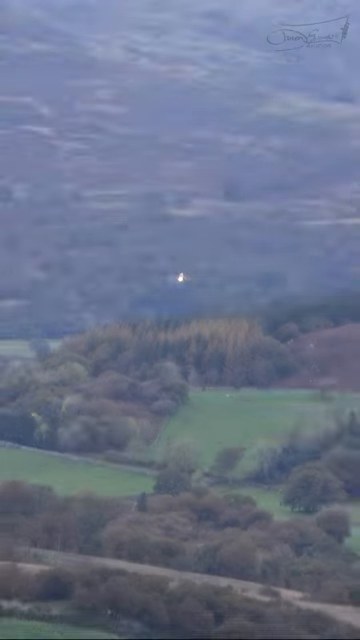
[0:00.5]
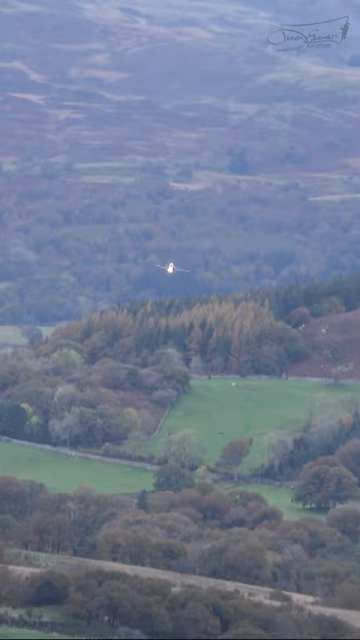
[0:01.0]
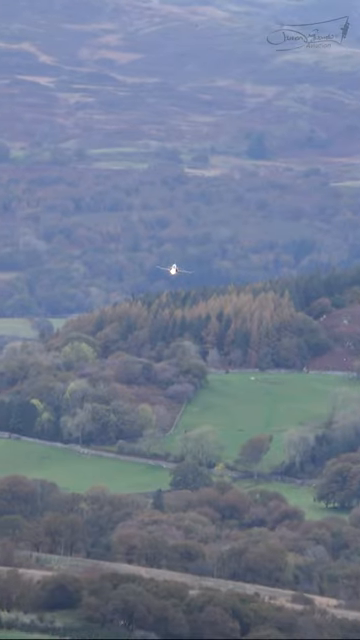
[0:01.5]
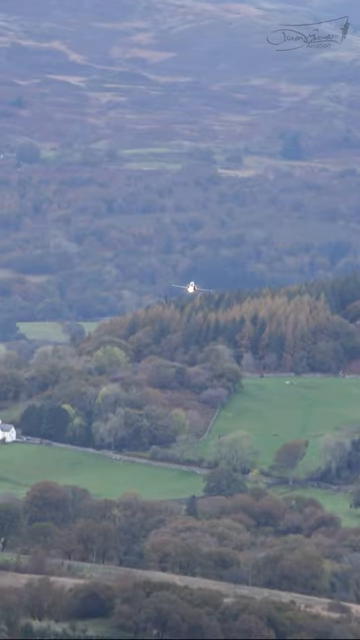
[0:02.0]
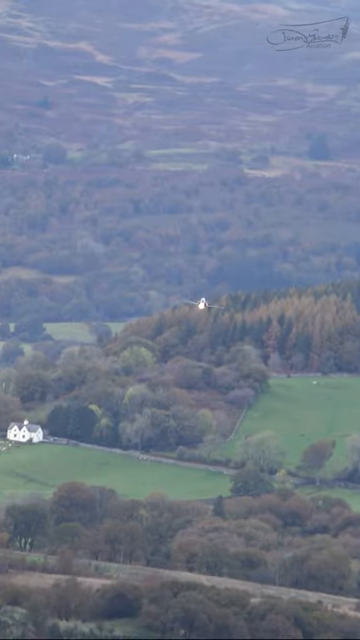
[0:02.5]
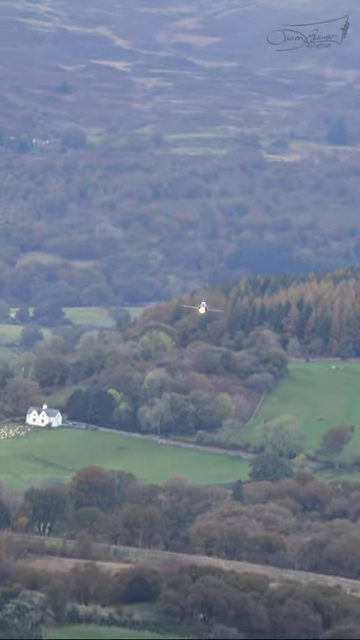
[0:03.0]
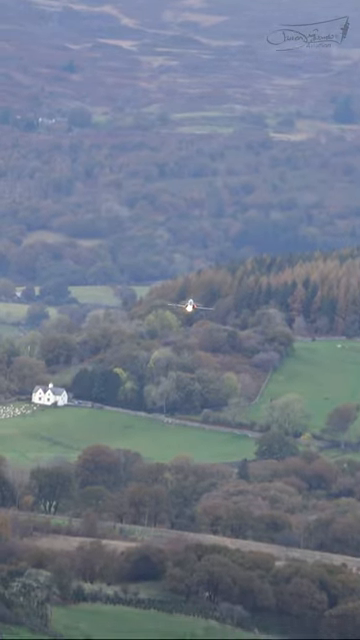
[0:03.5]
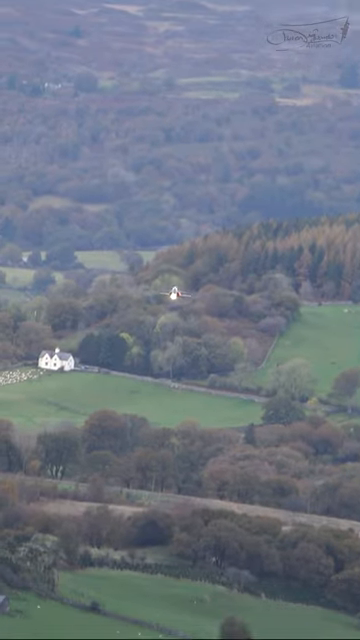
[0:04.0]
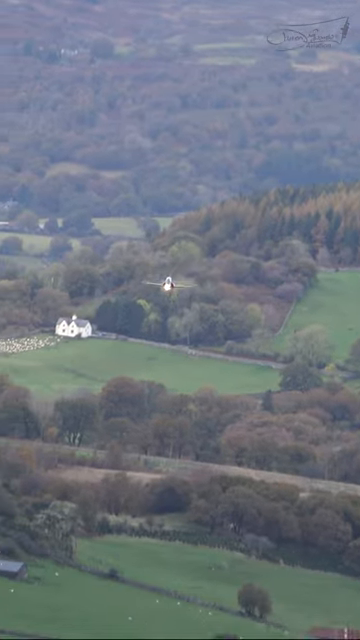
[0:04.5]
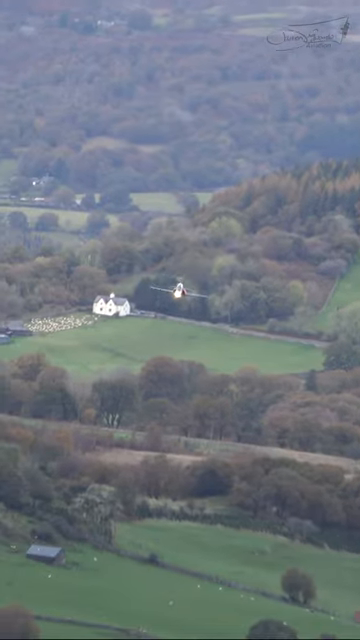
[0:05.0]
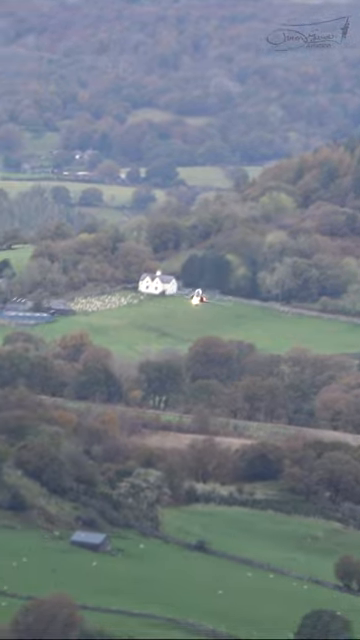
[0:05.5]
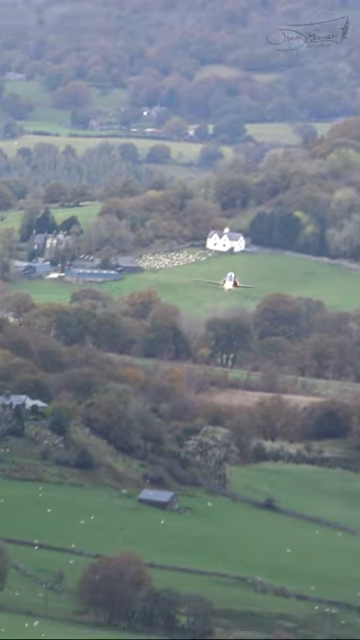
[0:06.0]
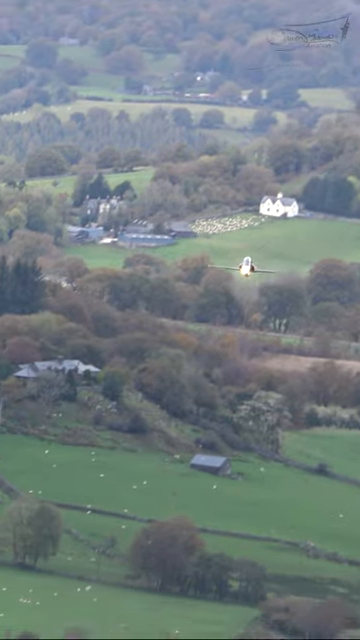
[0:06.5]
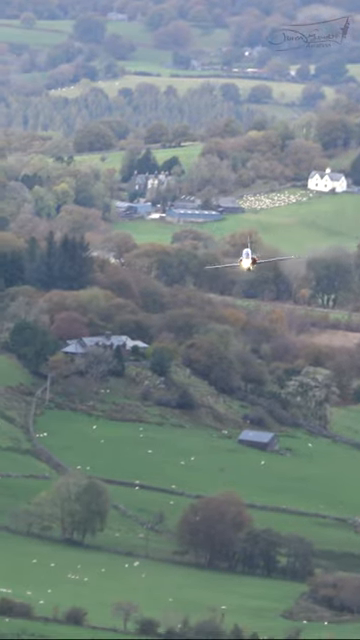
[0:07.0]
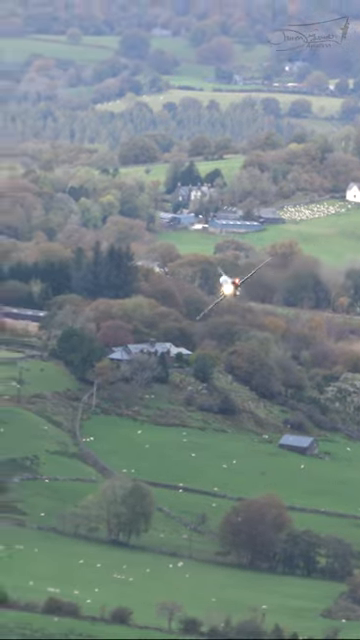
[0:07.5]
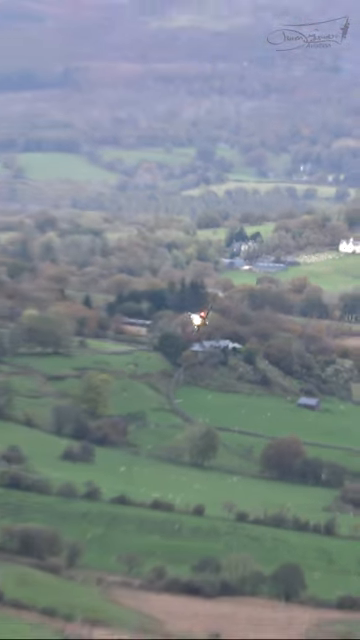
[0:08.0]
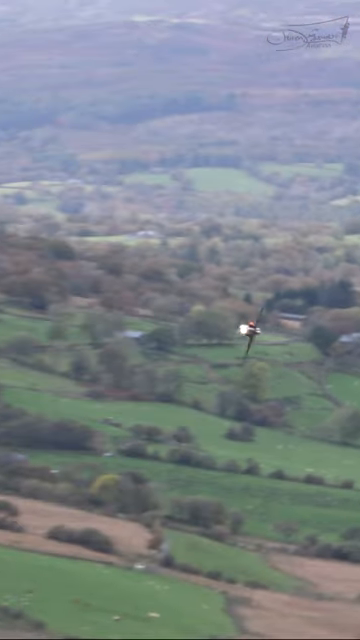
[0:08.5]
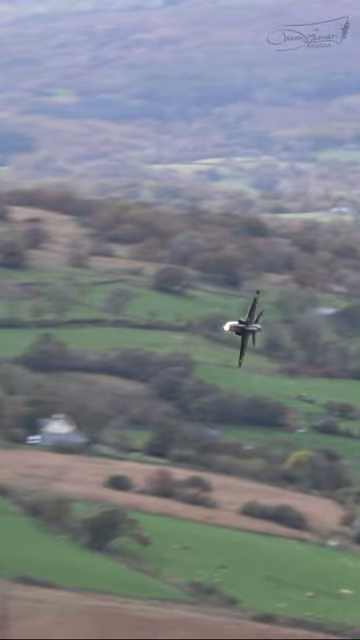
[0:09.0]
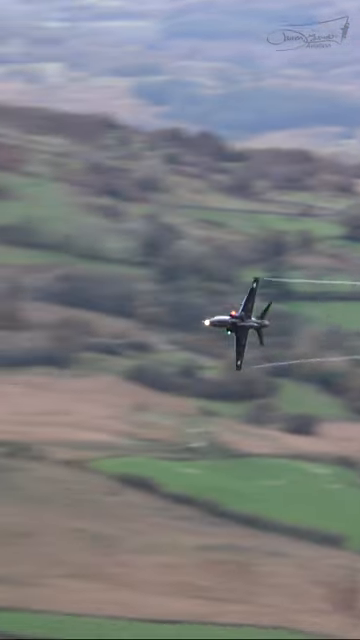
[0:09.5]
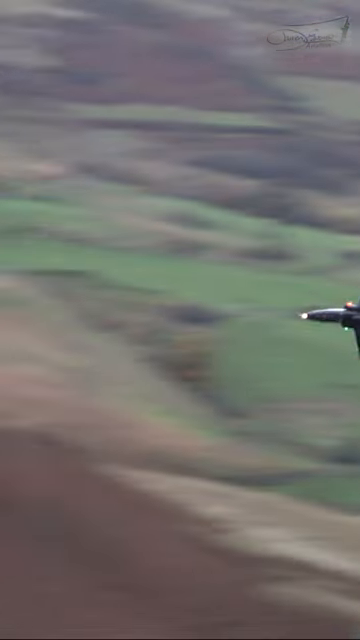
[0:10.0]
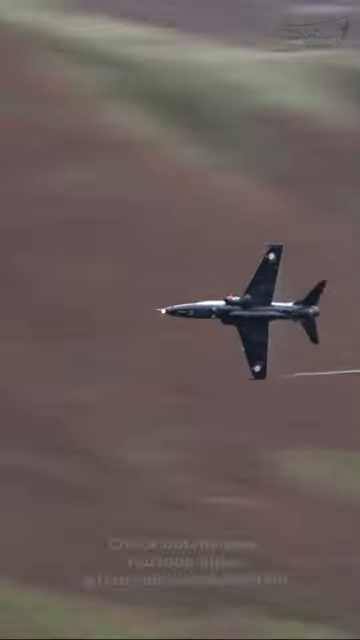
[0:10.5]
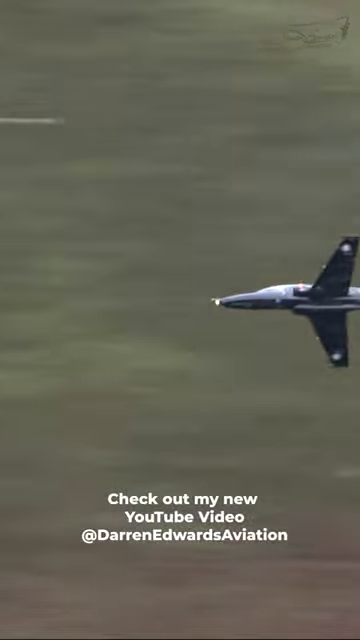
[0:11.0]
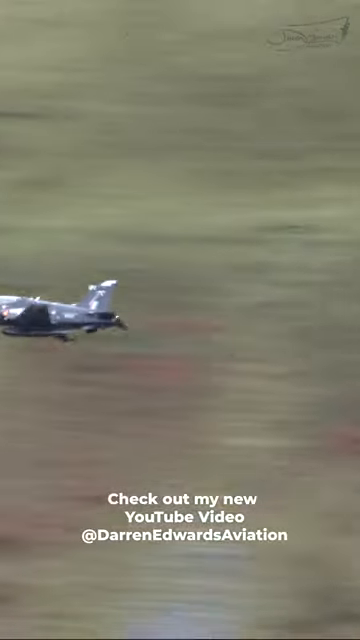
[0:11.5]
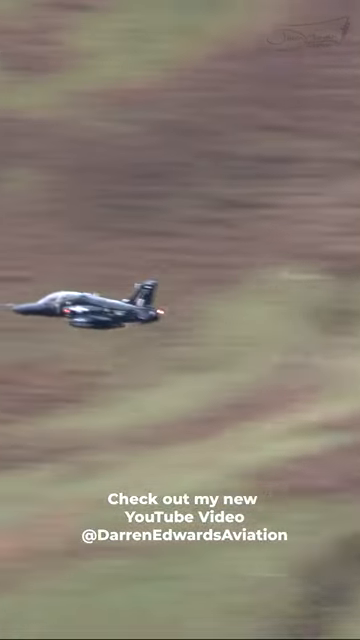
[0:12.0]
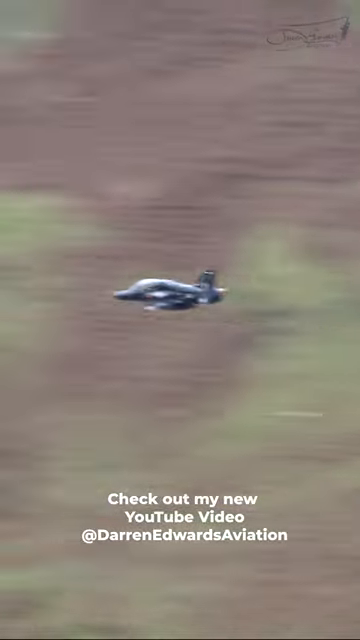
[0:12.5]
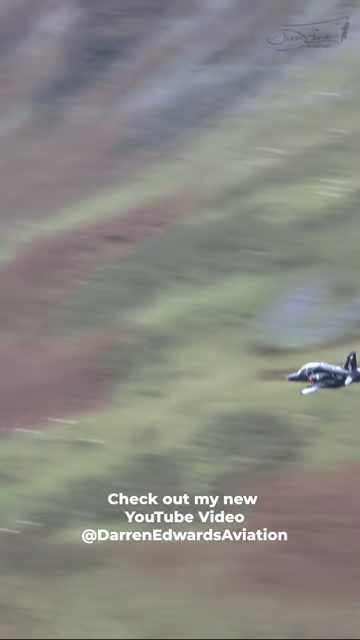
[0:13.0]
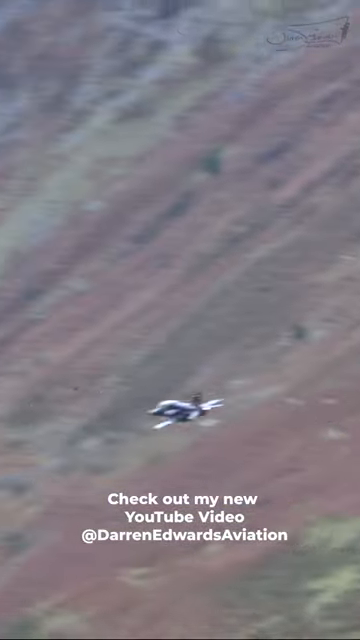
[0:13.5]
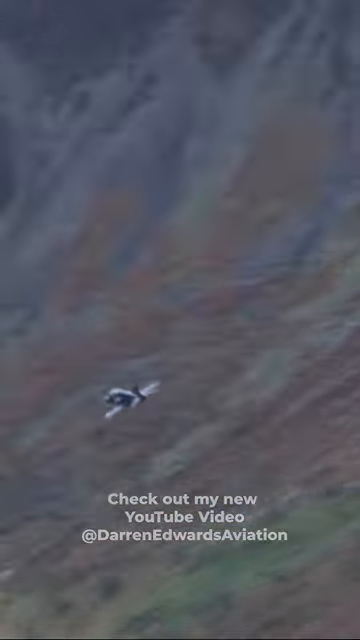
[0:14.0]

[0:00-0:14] A fighter jet, dark grey or perhaps black in color, soars through the air very fast. It flies above what looks like green fields, with homes visible on the ground in what appears to be a rural area. There are a whole bunch of trees on the ground, along with a white house and some other houses. At the beginning the jet is coming toward the camera. It appears to do some sort of rolling motion to its right side, rolling over so that its bottom part is visible. The jet has some blinking lights on it. After rolling over to its right side, it flips back to its regular, horizontal position. At the end the jet glides through the air, heading to the left side.